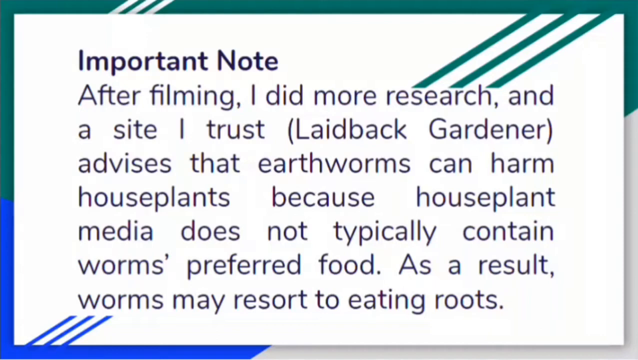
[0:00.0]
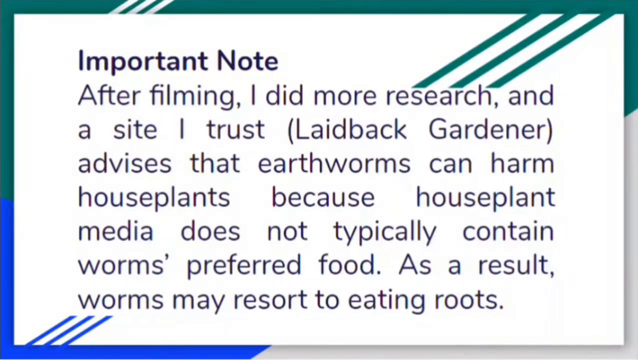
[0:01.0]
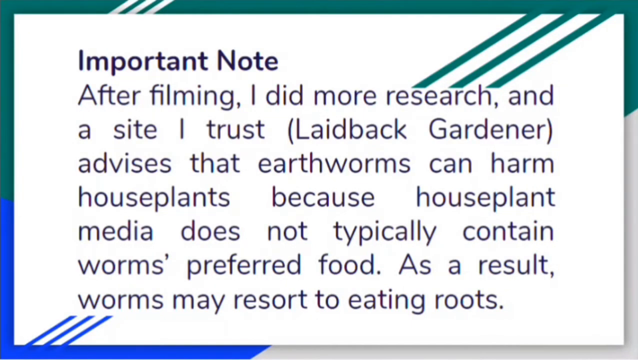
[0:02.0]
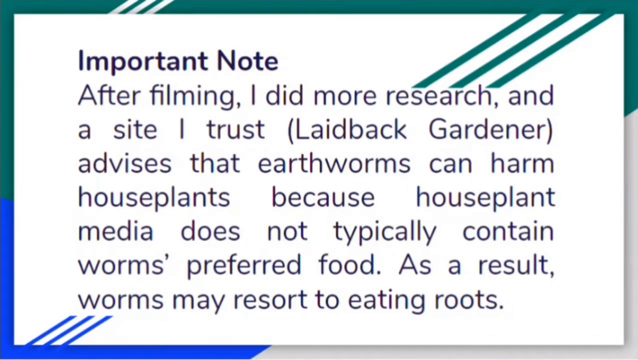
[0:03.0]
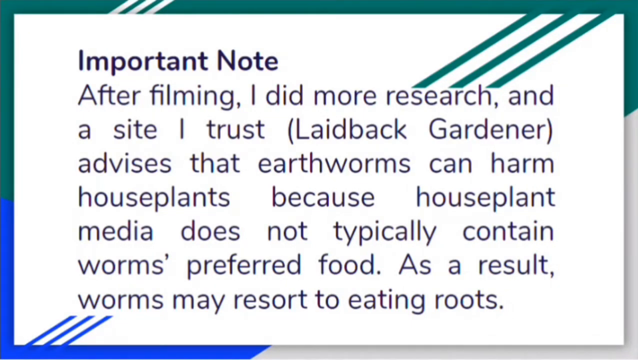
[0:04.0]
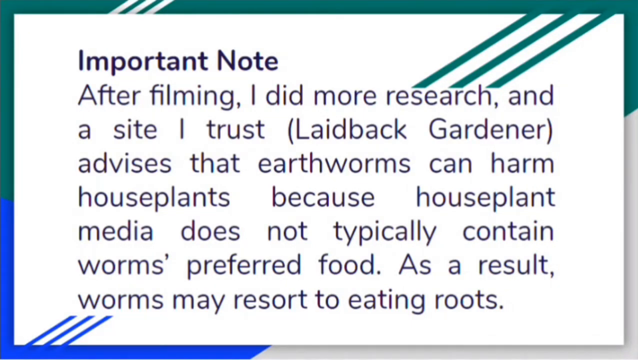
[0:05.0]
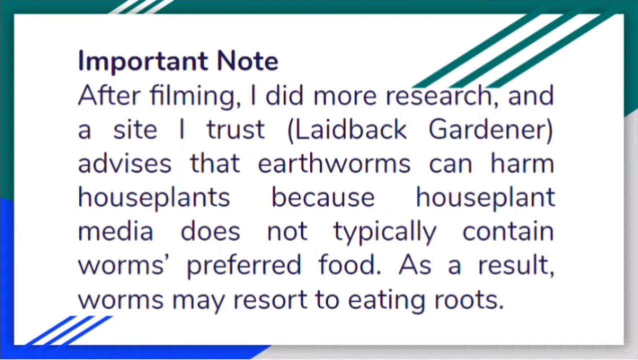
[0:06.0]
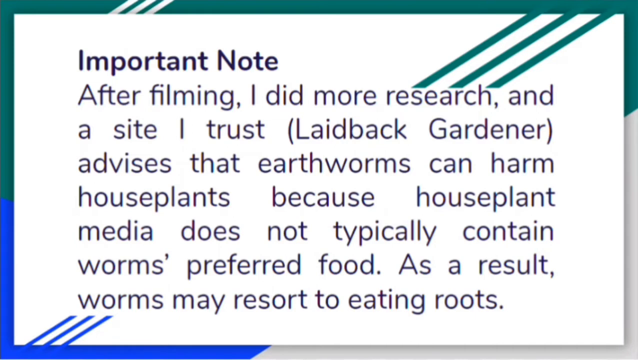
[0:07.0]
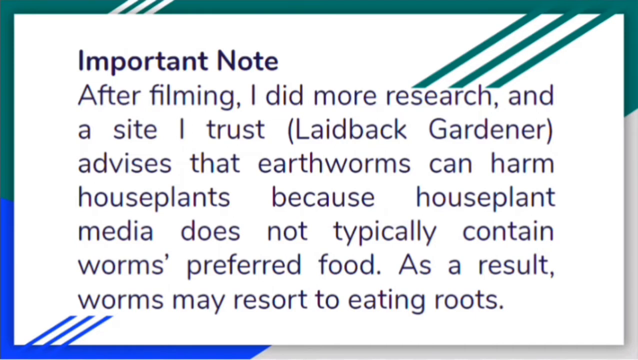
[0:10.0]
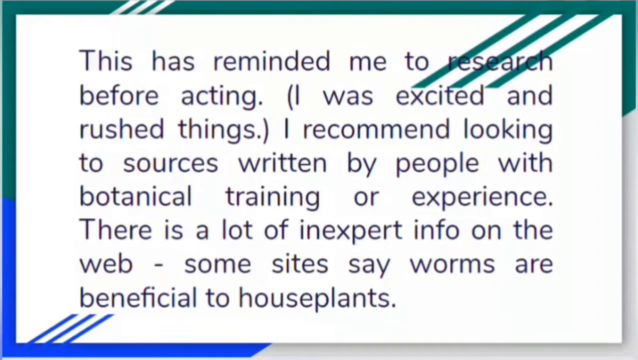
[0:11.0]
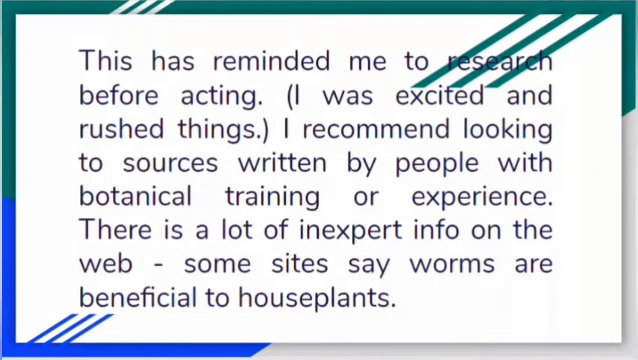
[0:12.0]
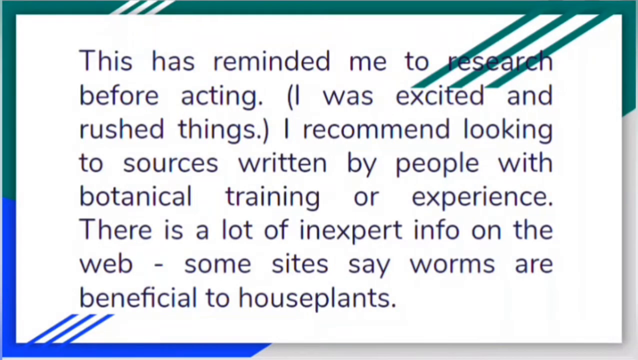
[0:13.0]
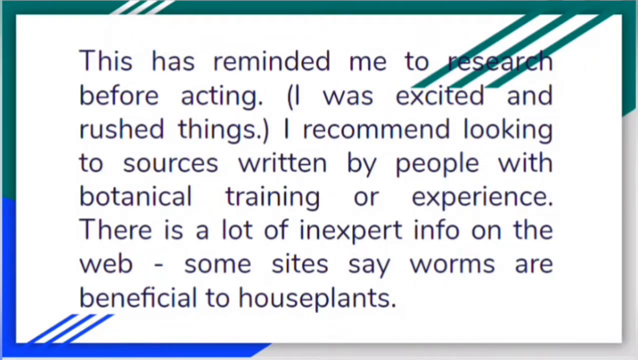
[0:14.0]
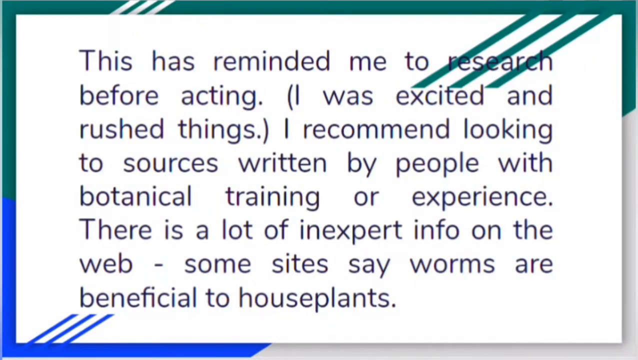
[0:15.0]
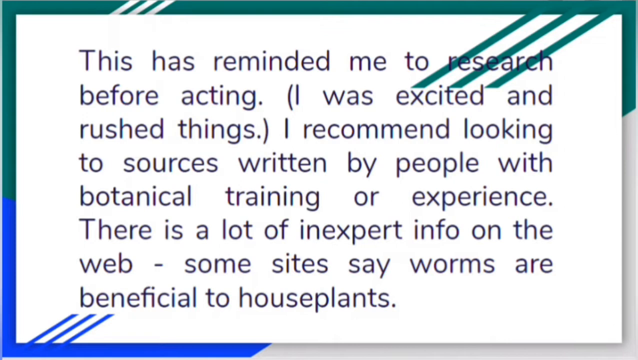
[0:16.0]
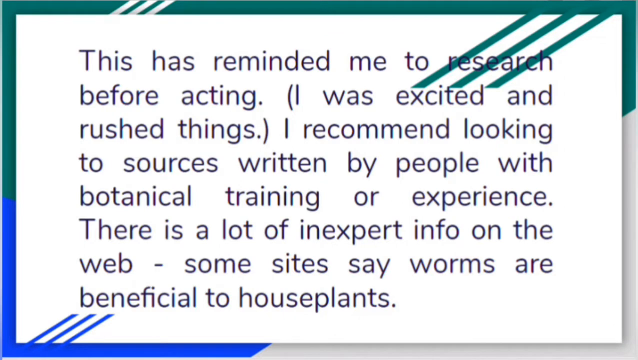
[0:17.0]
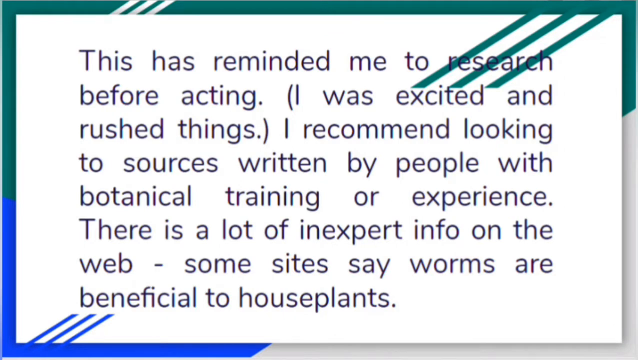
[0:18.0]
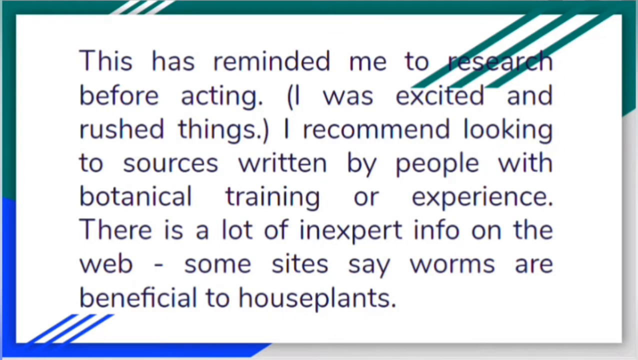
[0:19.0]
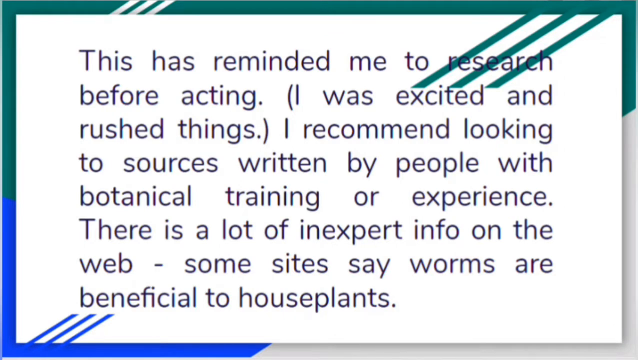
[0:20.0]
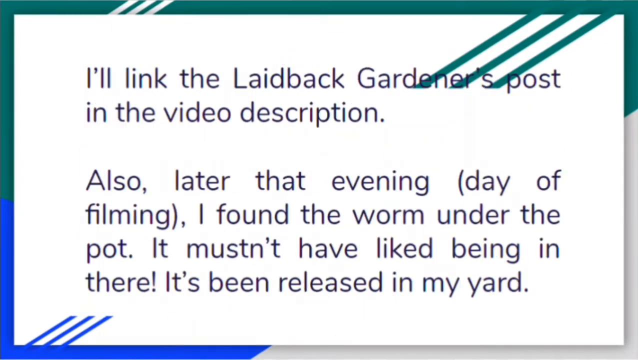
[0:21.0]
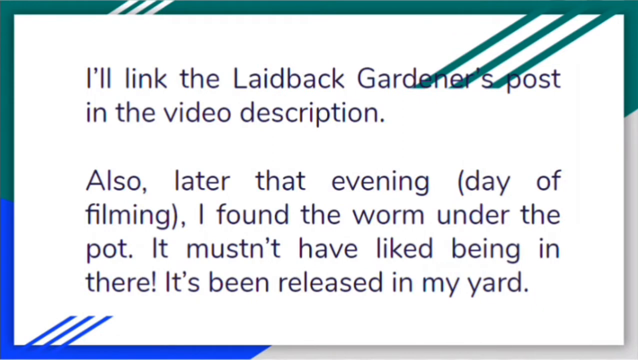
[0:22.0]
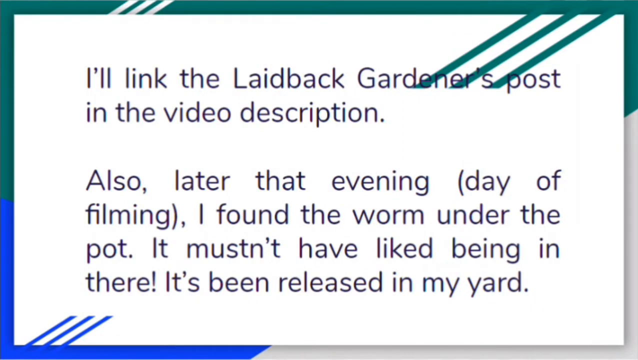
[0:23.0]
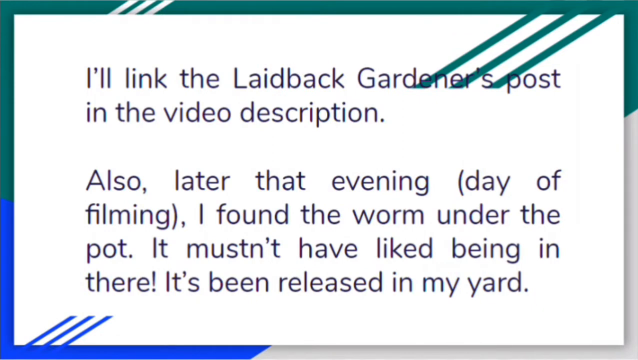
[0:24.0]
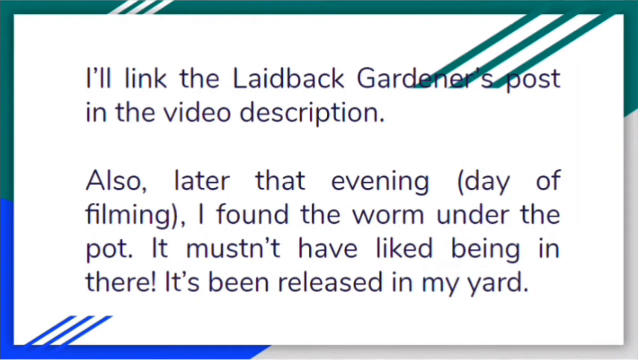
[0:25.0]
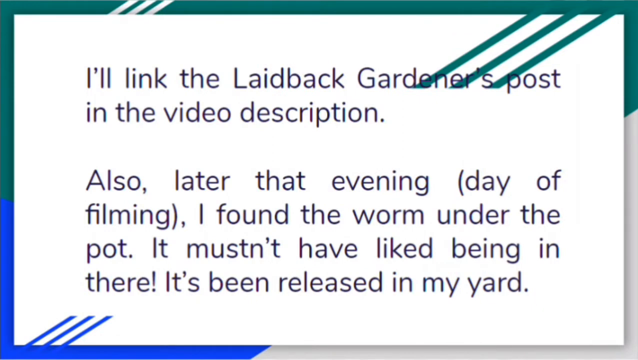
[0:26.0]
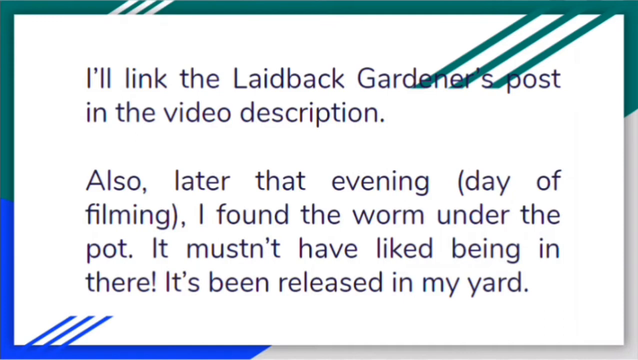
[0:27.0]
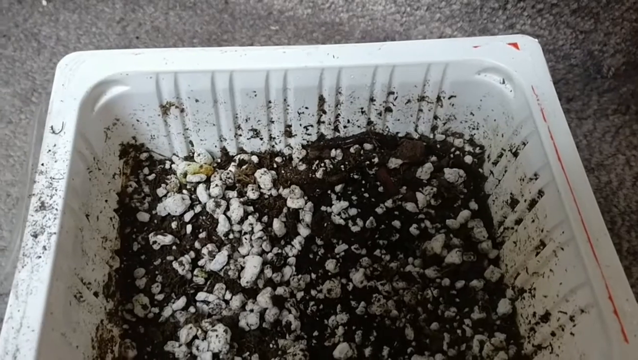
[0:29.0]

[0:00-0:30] A page full of text appears, titled "important note." The text concerns earthworms and how they can harm plants; the writer advises seeking out an expert and says they will also link a gardener's post. These words appear across three different pages. Next, a white, plastic-looking bin is shown with dirt in it, not even halfway filled, along with white, pebbly-looking rocks. Movement is visible inside the bin, up near the top: something black, long and squirmy, probably an earthworm.